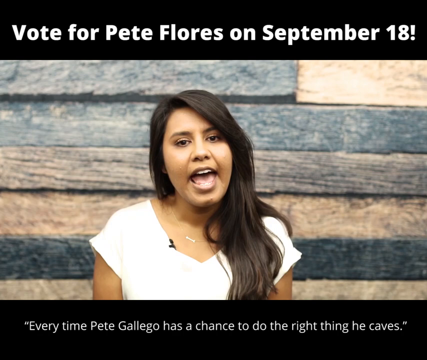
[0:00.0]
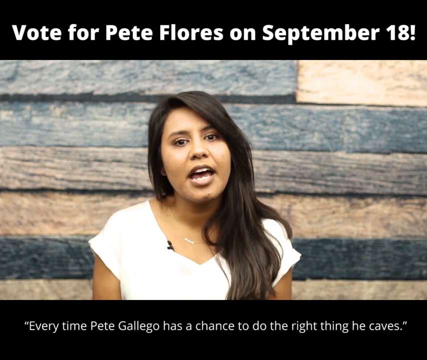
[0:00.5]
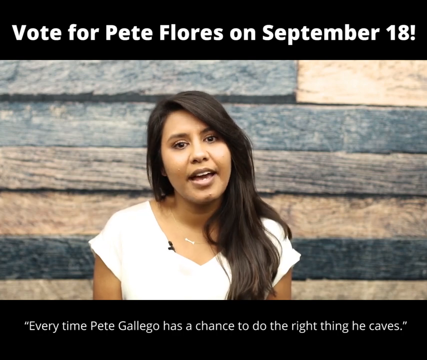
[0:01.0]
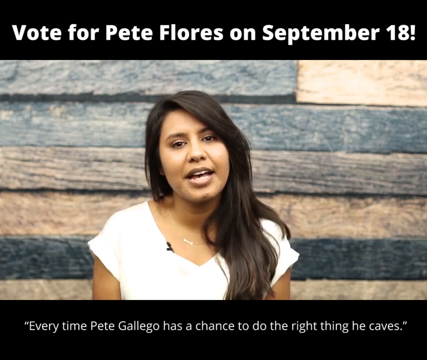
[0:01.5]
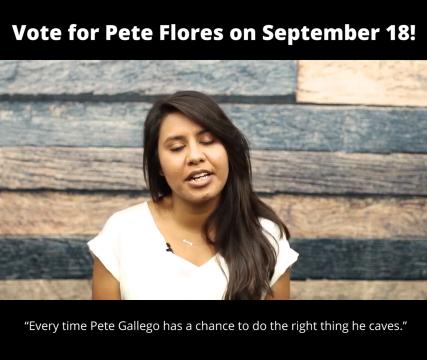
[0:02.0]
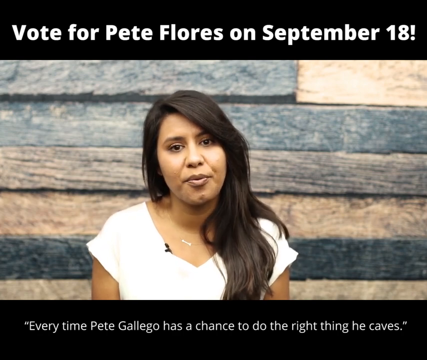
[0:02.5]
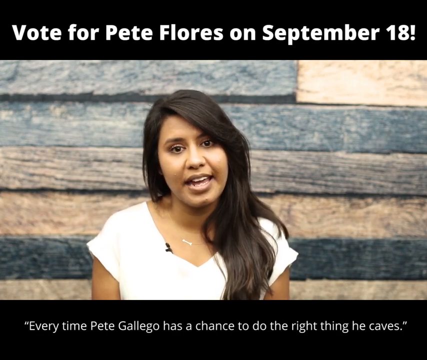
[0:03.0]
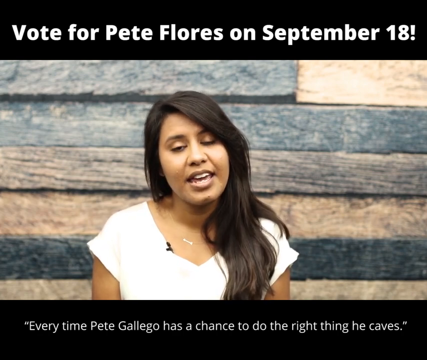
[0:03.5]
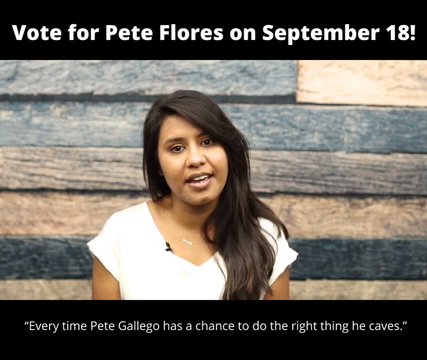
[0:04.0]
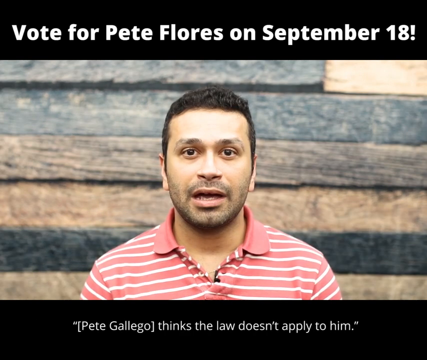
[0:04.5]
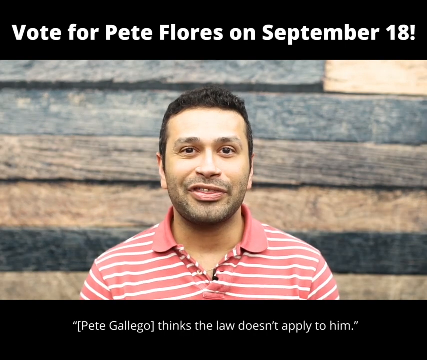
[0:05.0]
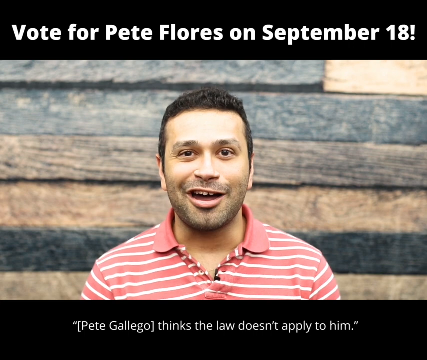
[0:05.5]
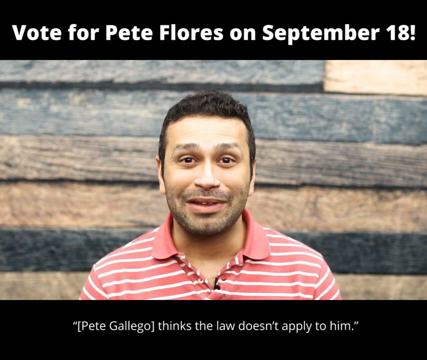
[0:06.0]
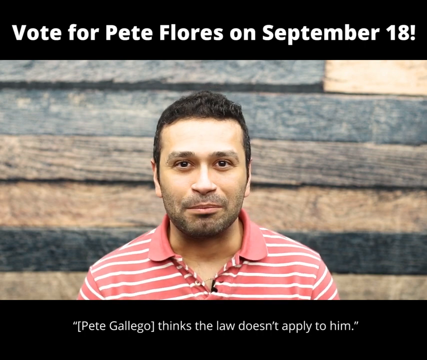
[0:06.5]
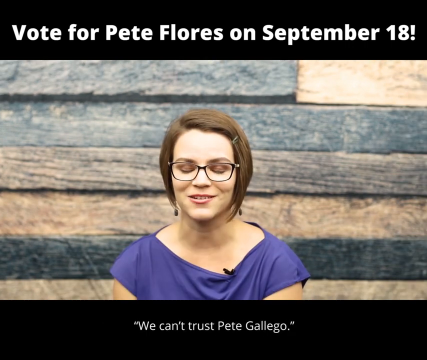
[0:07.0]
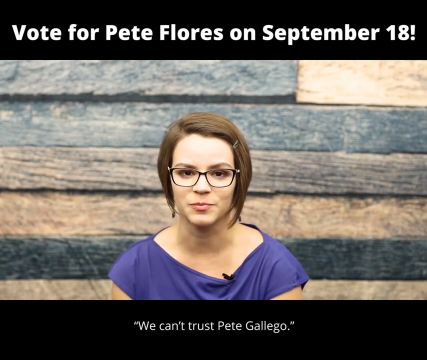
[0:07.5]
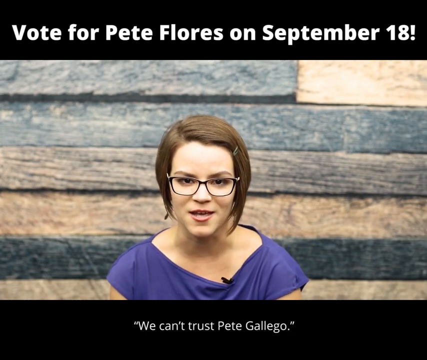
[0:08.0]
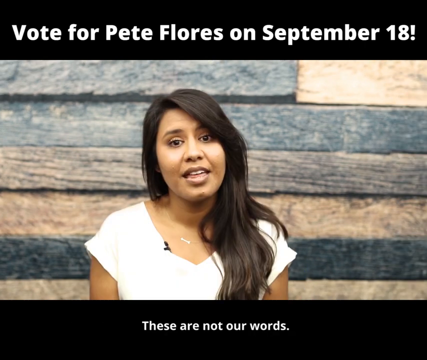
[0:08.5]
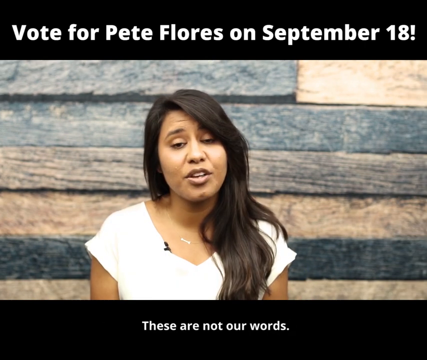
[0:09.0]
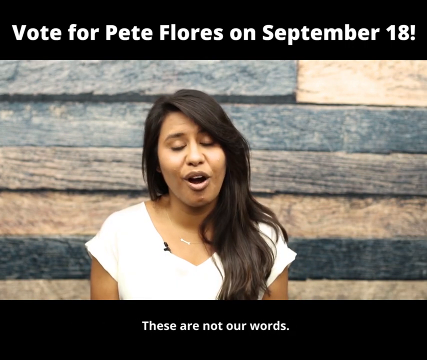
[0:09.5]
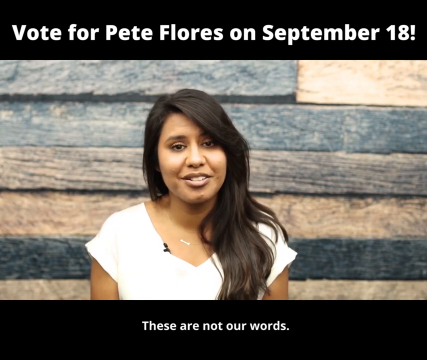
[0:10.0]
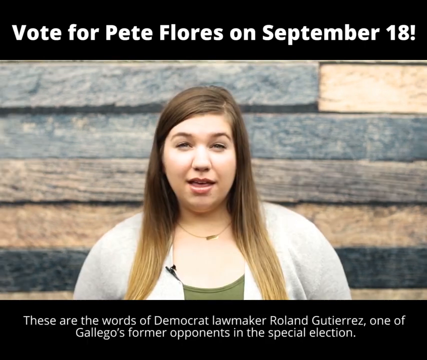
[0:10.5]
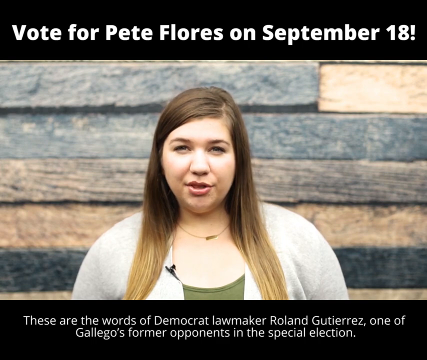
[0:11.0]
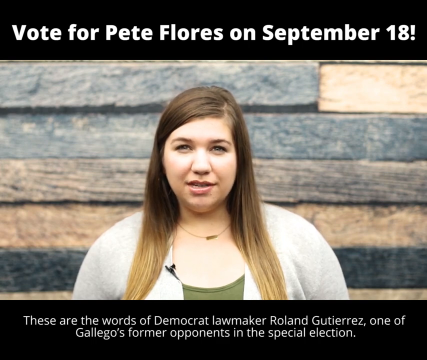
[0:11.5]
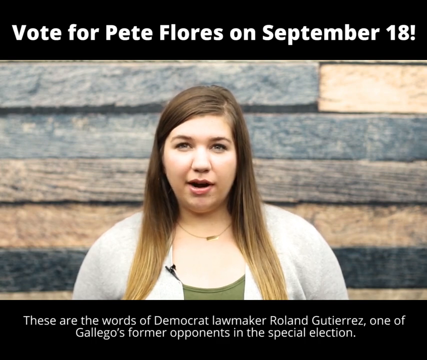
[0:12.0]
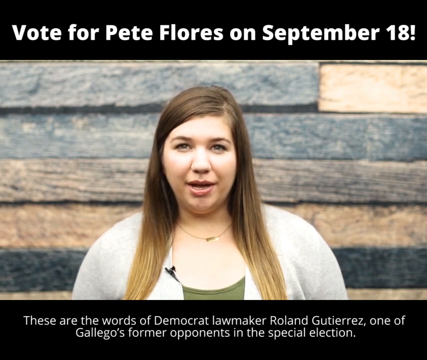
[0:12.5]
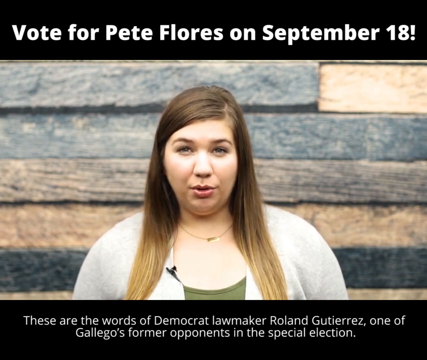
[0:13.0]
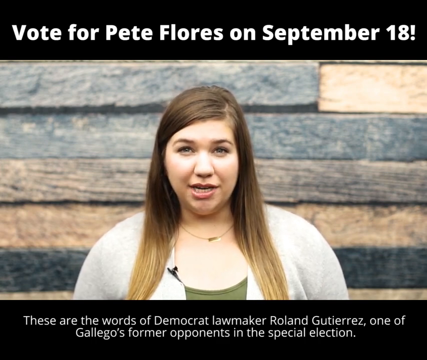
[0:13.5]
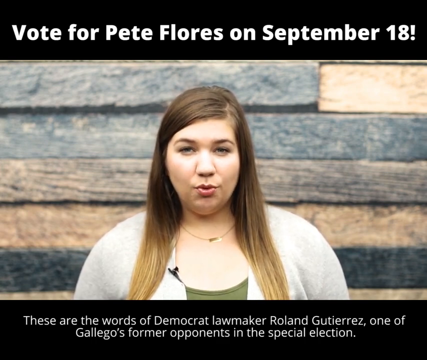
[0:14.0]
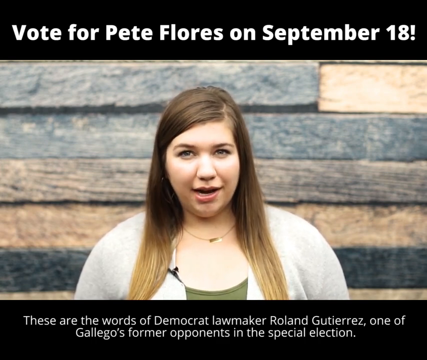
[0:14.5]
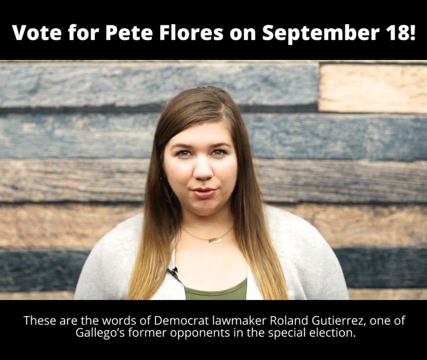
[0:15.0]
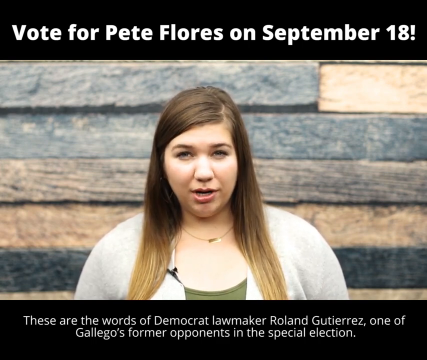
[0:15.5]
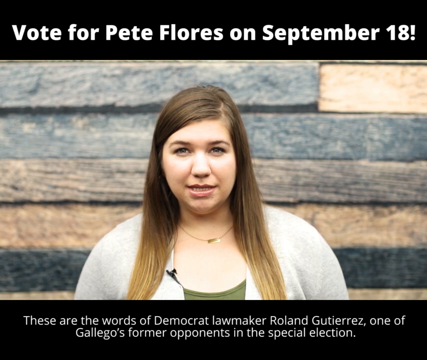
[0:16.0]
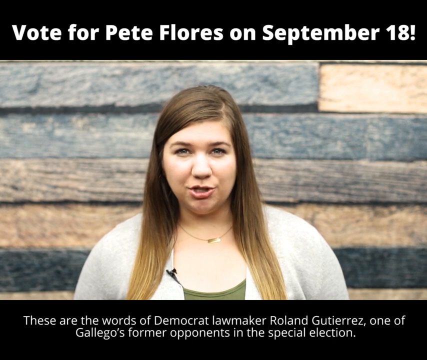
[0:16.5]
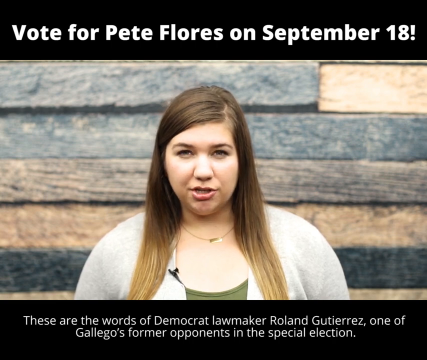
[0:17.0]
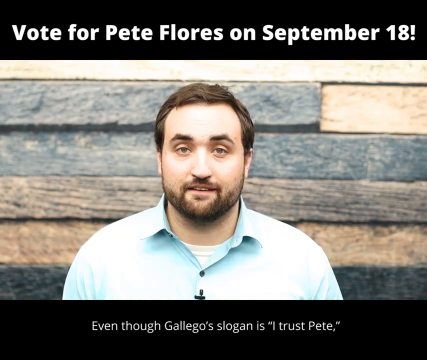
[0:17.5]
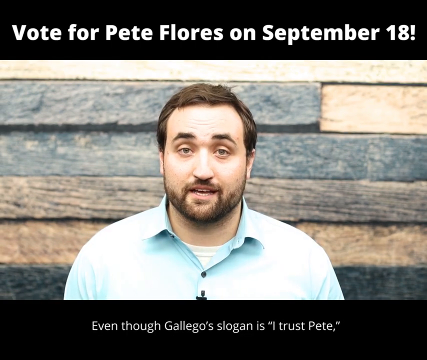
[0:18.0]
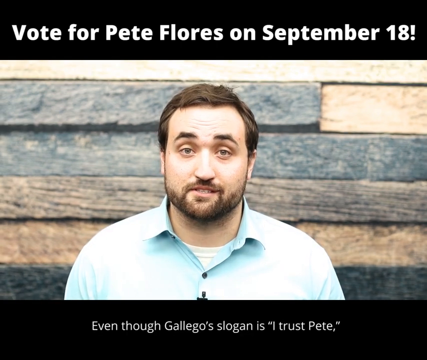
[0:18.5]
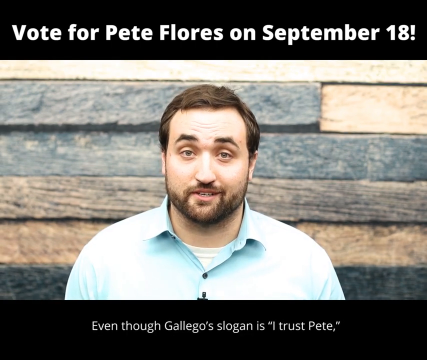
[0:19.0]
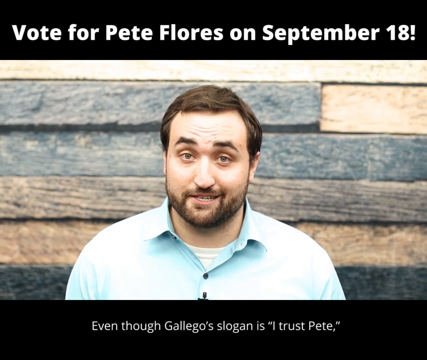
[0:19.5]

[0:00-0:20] A young woman with long black hair, wearing a white short-sleeved top, stands in the middle of the screen talking directly to the camera. A banner above her says "vote for Pete Flores on September the 18th", and a line underneath her reads "every time Pete Gallego has a chance to do the right thing he caves." The image changes to a smiling man looking at the camera; he has short dark hair and wears a red t-shirt with white stripes. Next comes another, younger woman with a short brown hairstyle and a blue top. The video returns to the first woman, and words underneath now say "these are the words of democrat lawmaker Roland Gutierrez, one of Gallego's former opponents in the special election." A different young woman then talks to the camera; she has long brown hair with a side parting, dark eyebrows, and wears a white cardigan over a green t-shirt, and she nods slightly at the camera.